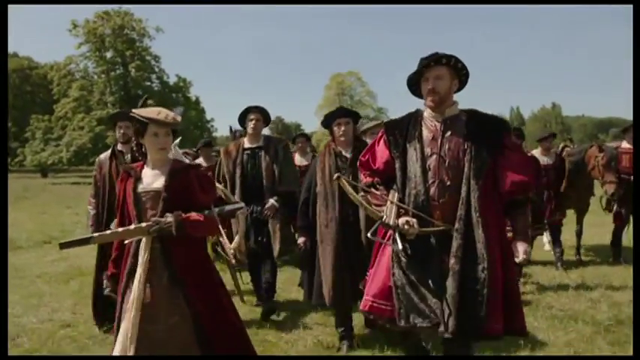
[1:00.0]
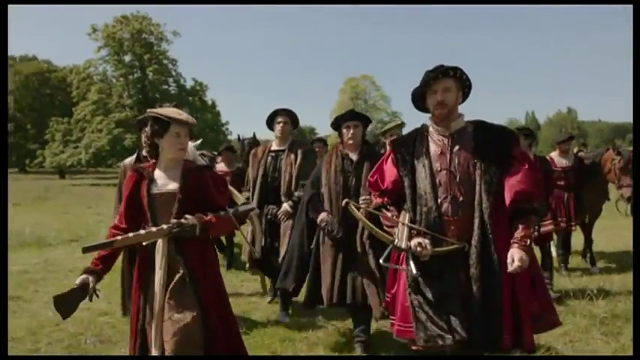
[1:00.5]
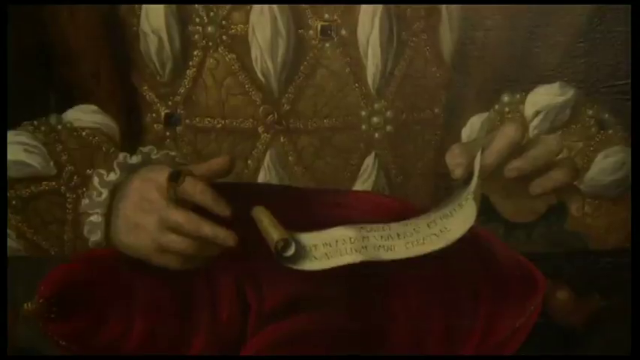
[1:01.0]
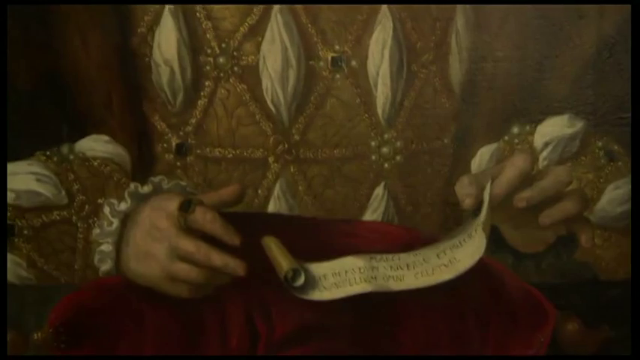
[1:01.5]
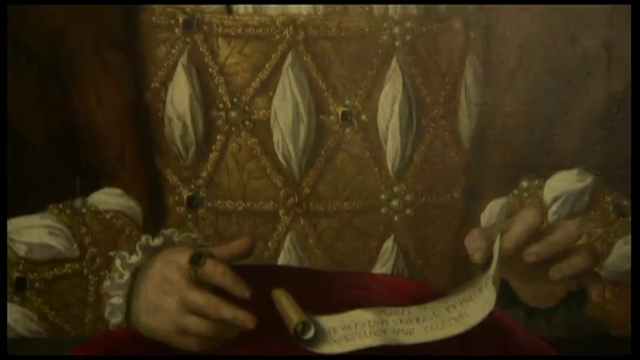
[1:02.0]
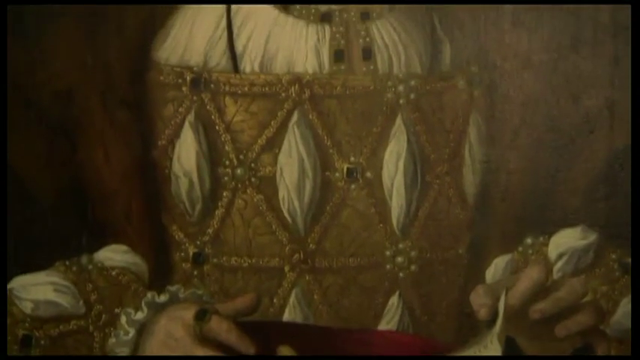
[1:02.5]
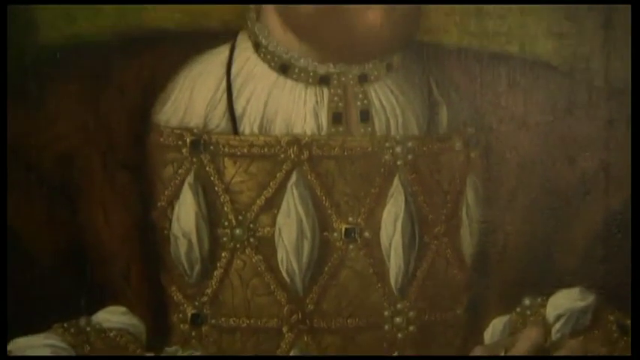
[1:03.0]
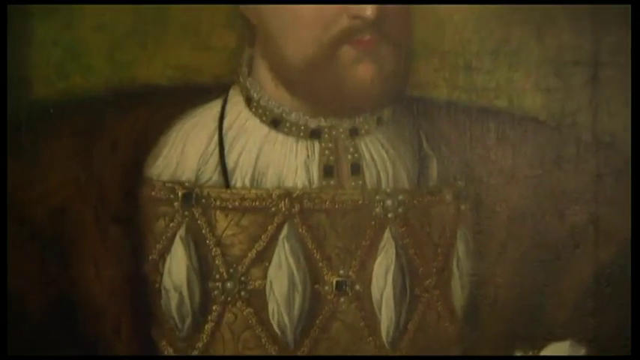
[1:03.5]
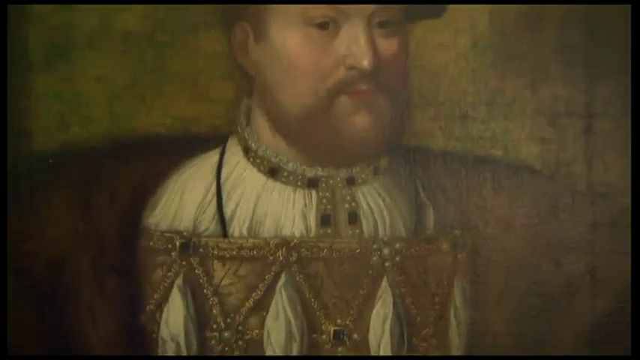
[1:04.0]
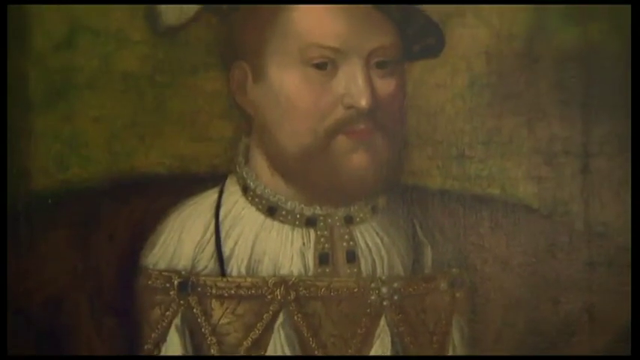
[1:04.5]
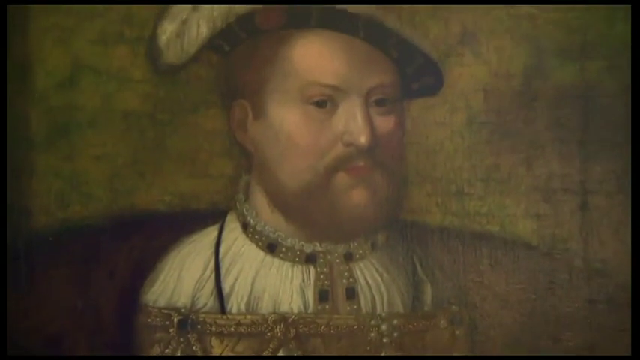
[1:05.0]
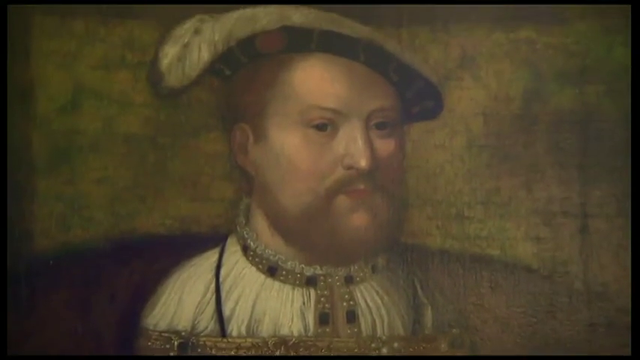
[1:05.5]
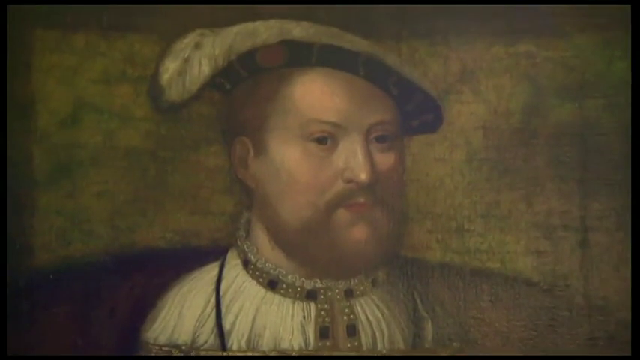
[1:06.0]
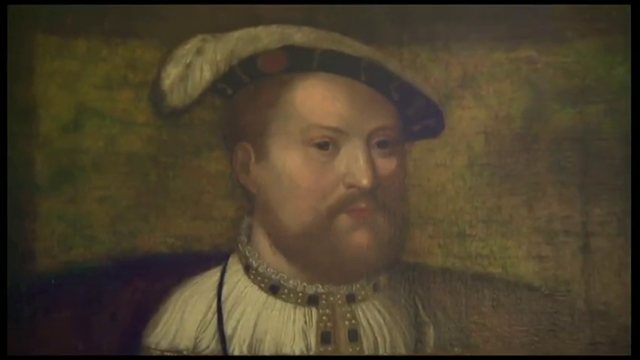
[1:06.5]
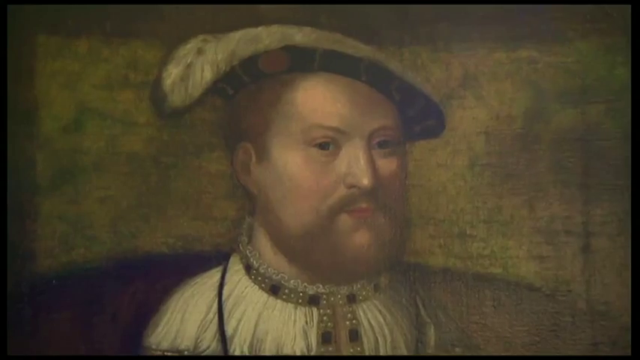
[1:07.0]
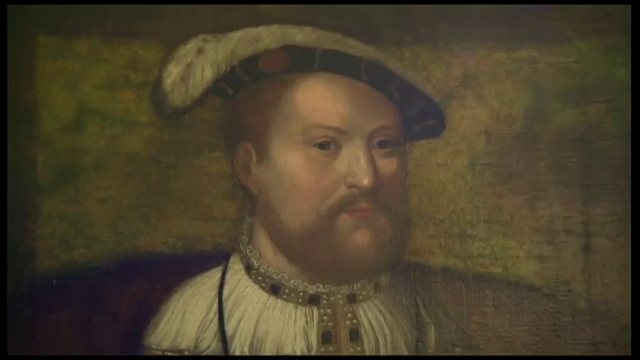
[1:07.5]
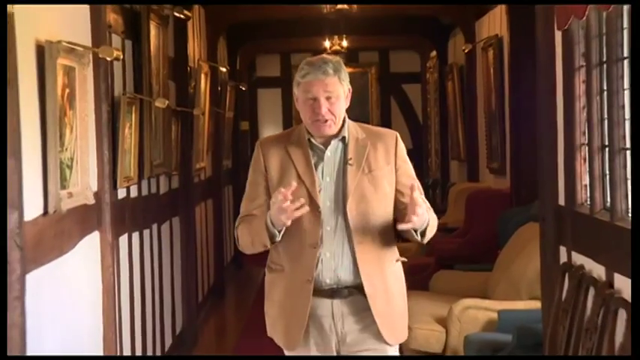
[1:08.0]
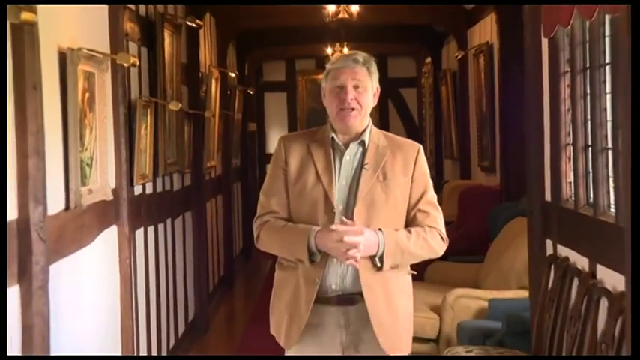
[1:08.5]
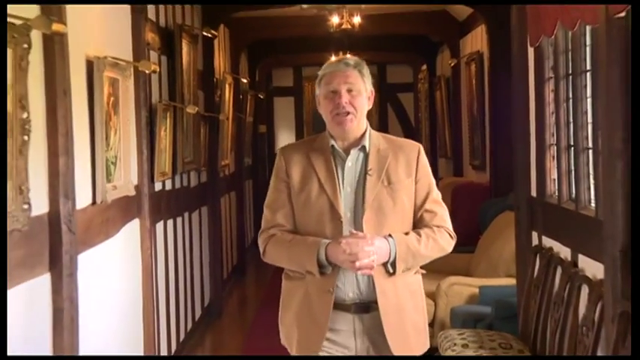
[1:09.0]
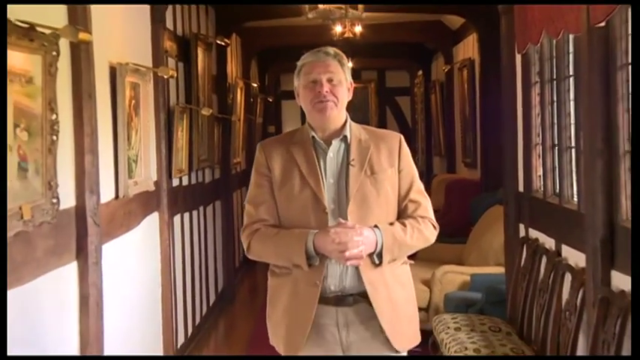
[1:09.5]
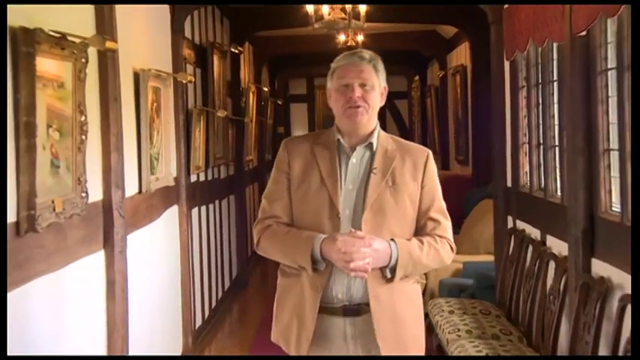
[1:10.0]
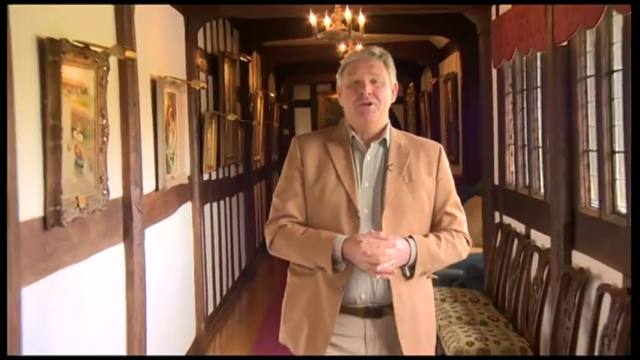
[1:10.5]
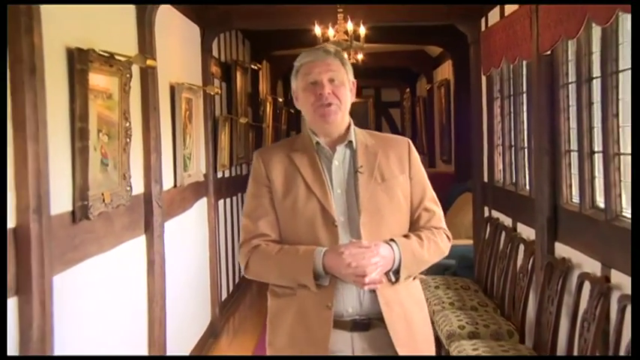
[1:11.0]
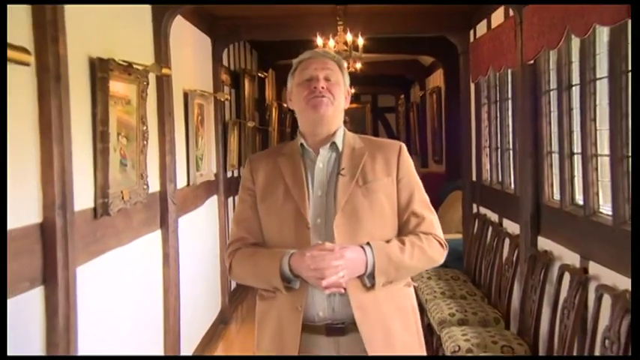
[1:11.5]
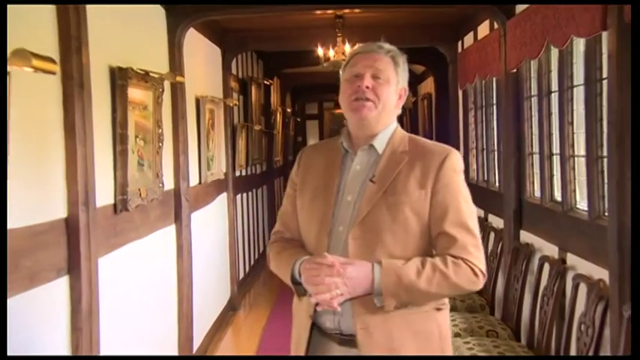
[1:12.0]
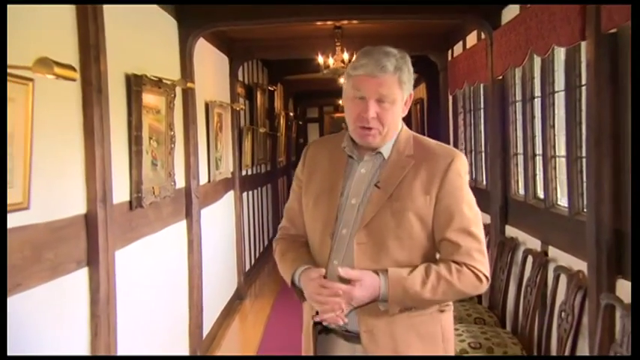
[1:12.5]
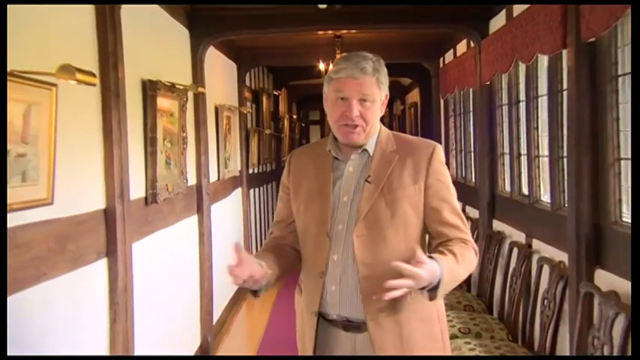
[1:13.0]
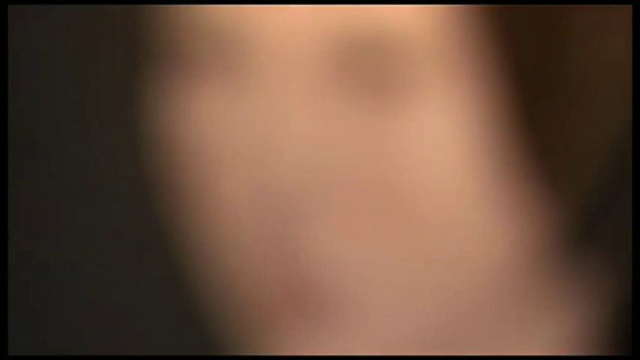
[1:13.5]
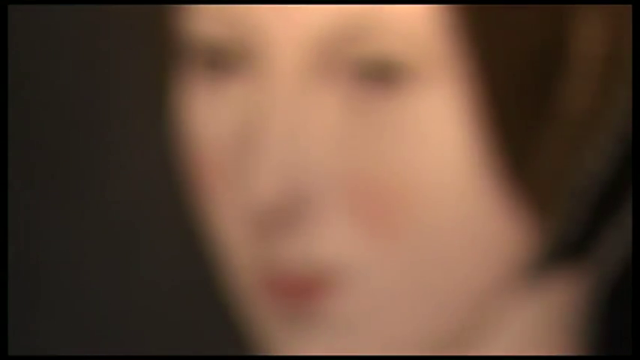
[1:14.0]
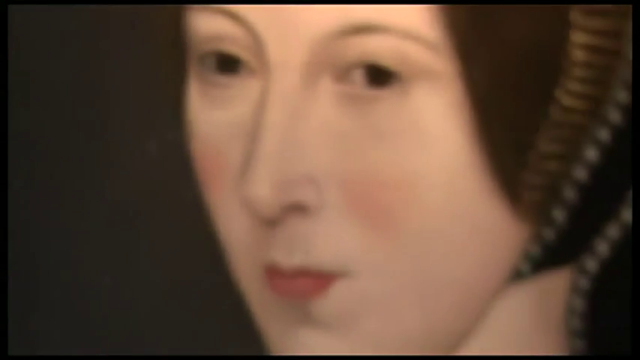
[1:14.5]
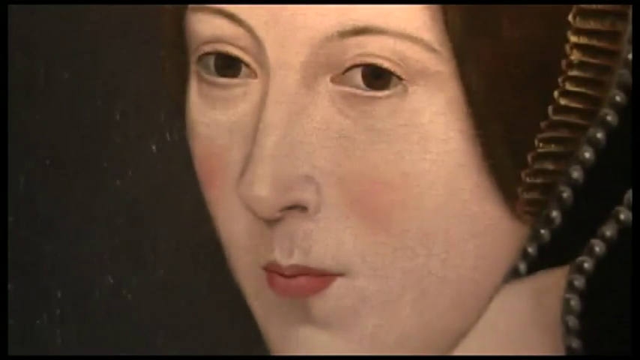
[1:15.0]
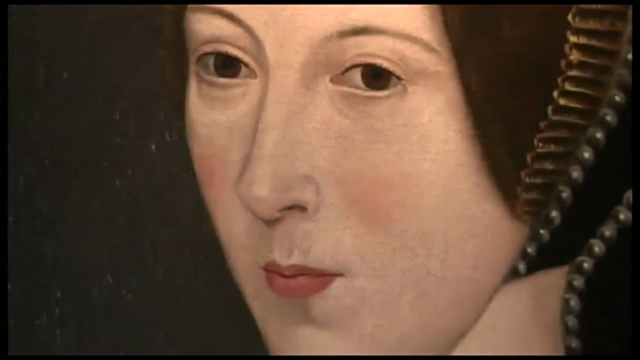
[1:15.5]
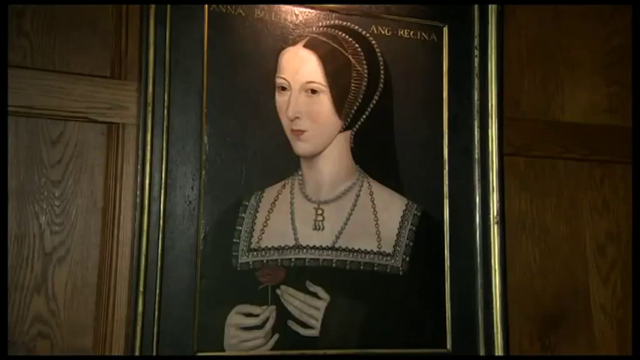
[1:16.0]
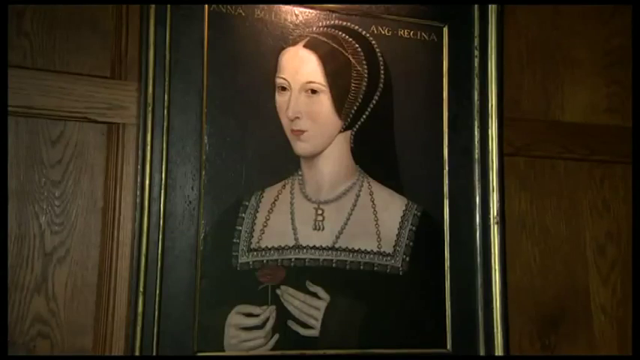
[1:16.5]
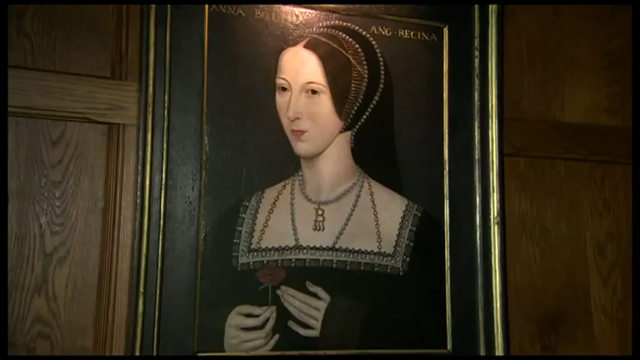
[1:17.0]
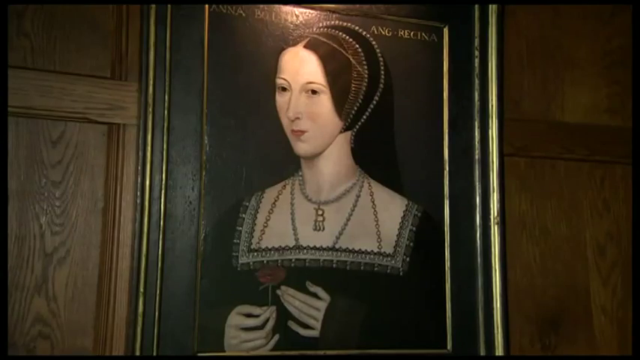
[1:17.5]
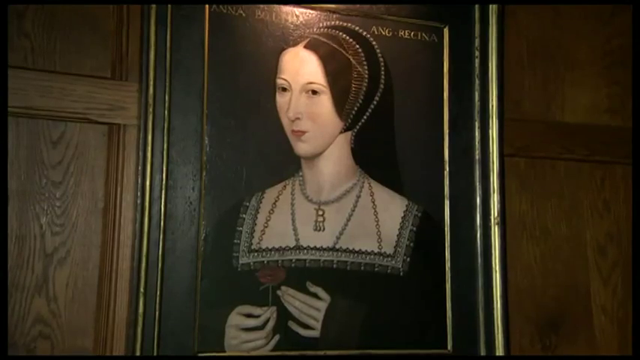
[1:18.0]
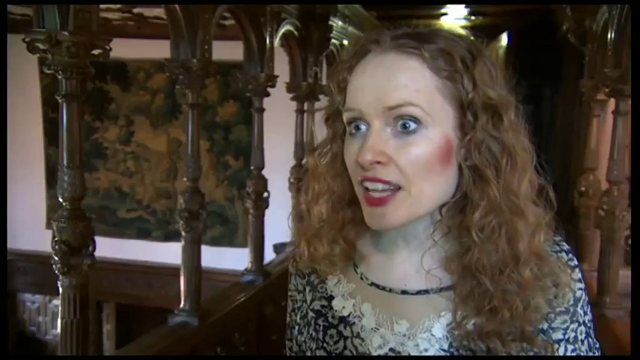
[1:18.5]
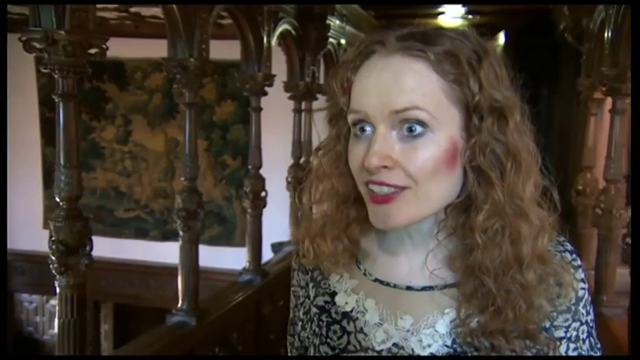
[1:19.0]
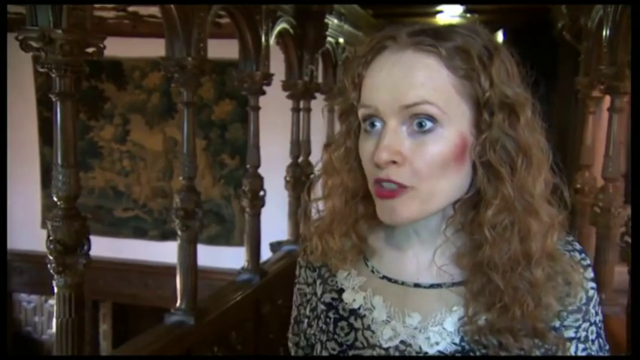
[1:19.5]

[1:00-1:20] The same pictures of the persons wearing hats are shown. After that, a person wearing a suit and shirt is talking. Then there is a picture of a woman named Anna, and another woman is talking. A woman named Katel Watson is shown at the end.